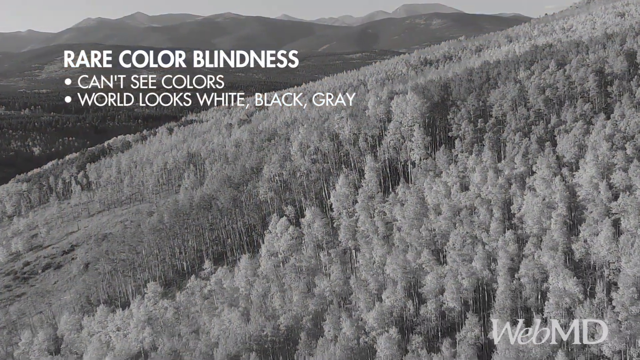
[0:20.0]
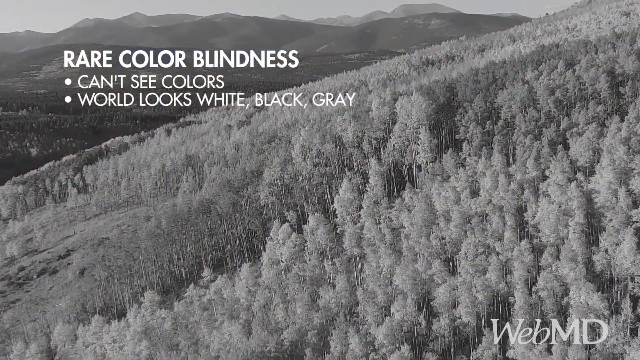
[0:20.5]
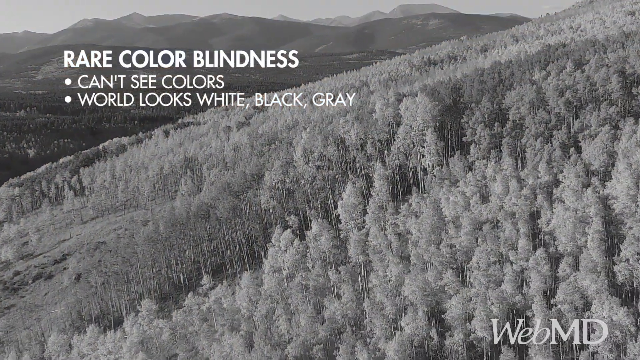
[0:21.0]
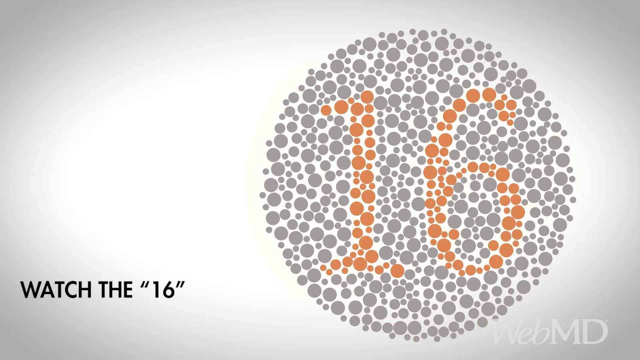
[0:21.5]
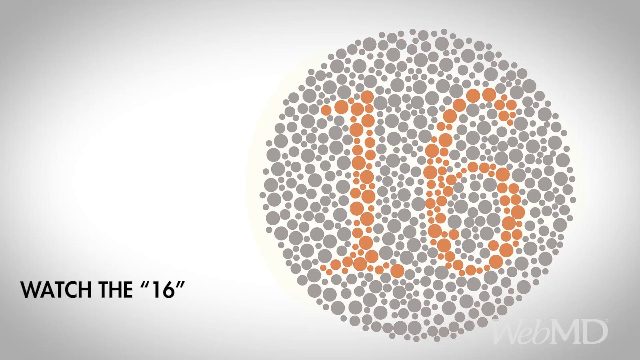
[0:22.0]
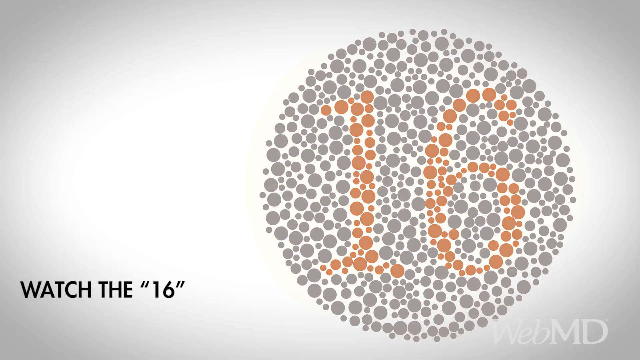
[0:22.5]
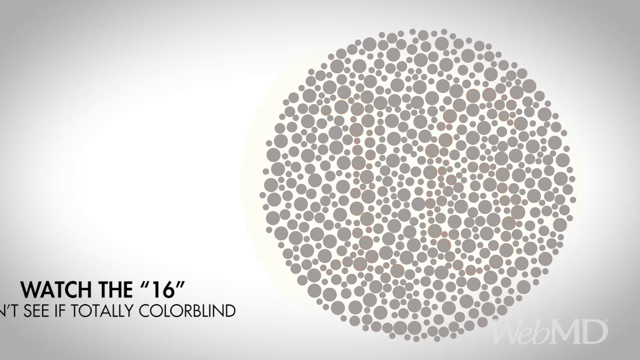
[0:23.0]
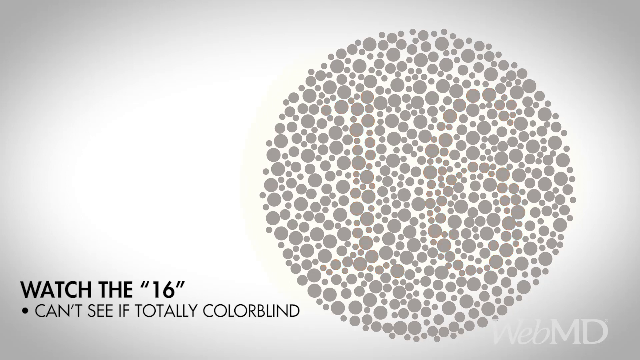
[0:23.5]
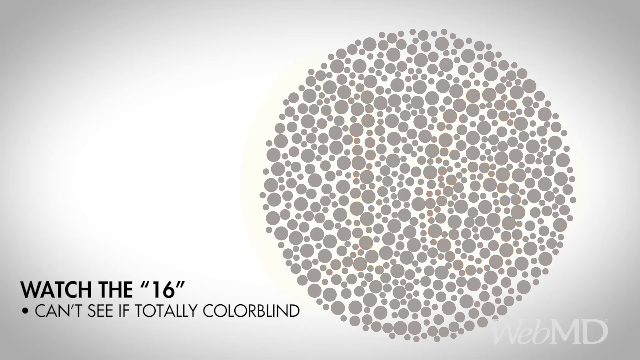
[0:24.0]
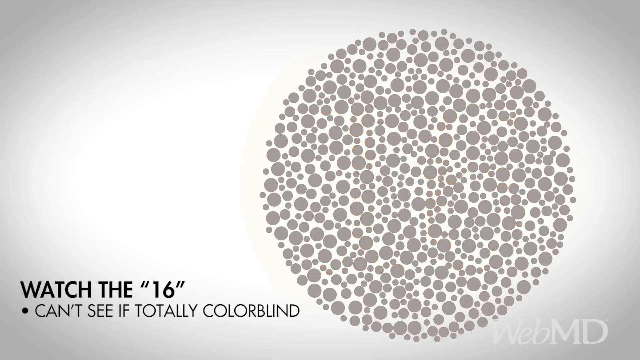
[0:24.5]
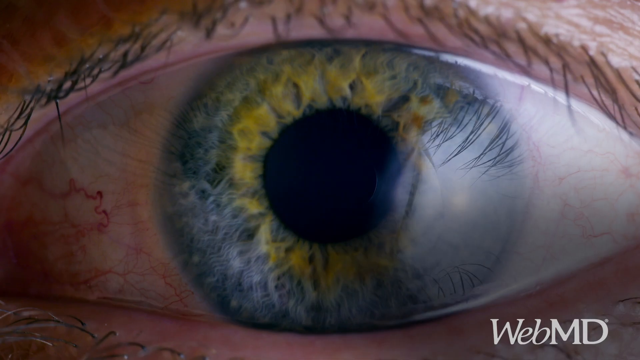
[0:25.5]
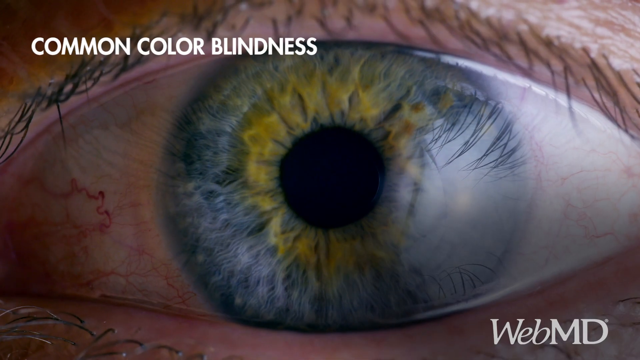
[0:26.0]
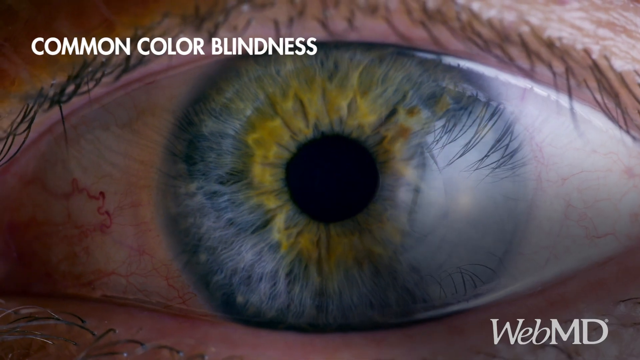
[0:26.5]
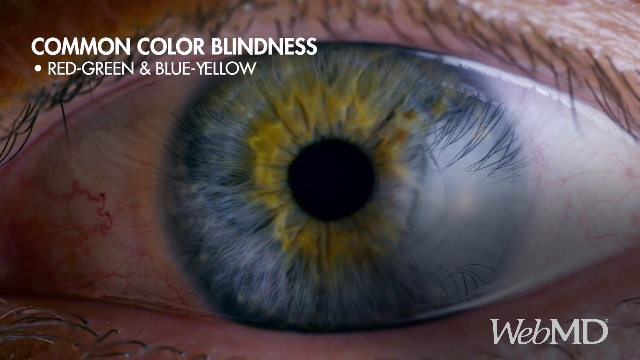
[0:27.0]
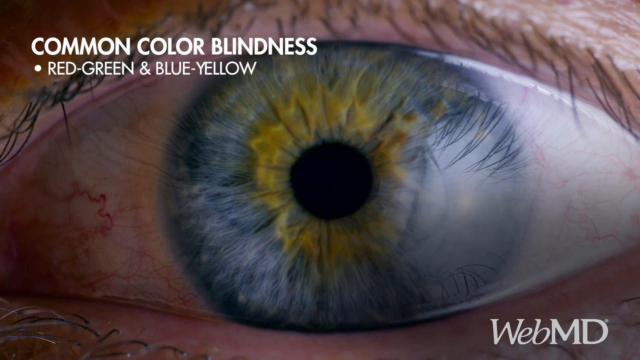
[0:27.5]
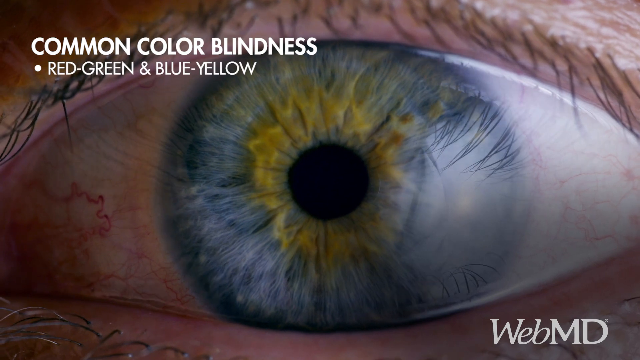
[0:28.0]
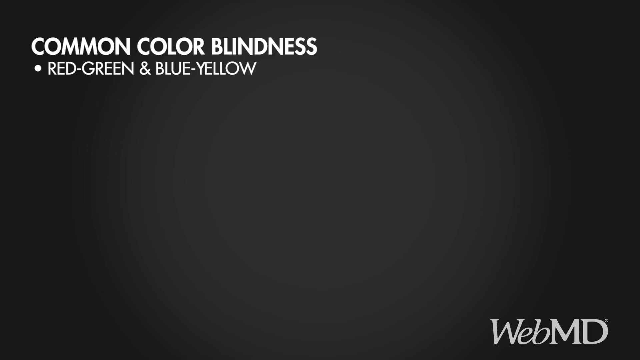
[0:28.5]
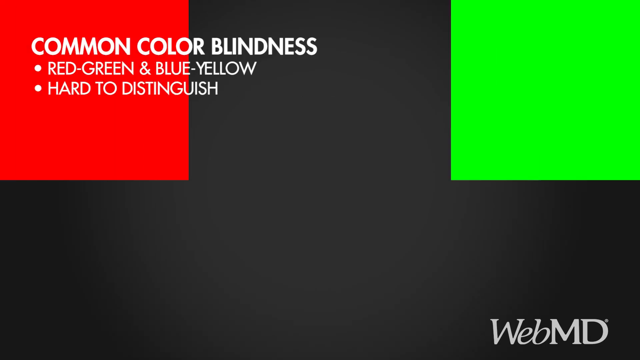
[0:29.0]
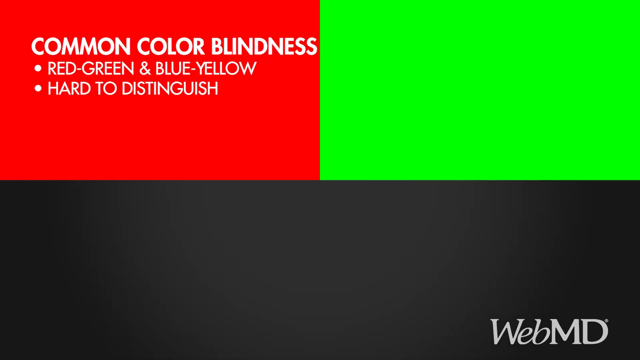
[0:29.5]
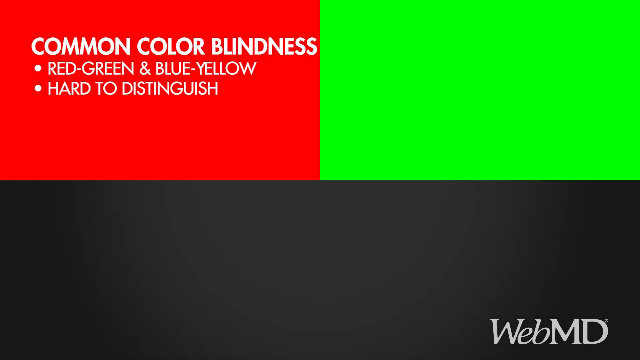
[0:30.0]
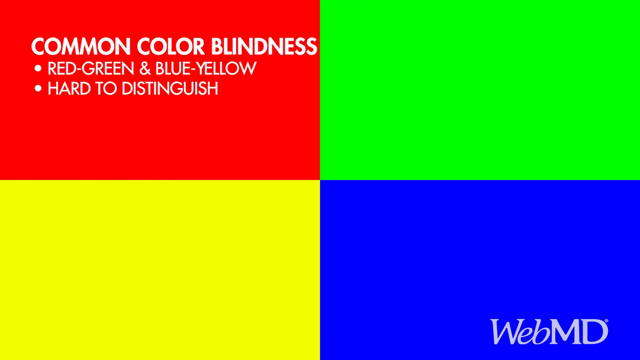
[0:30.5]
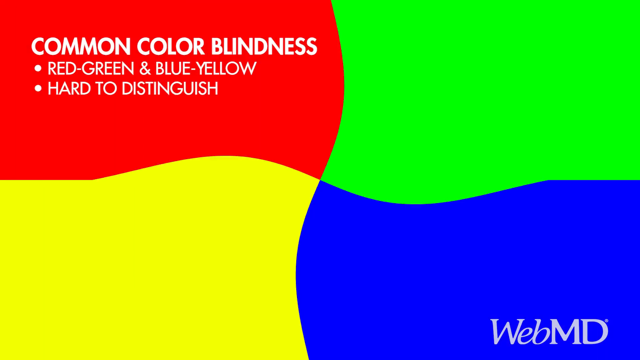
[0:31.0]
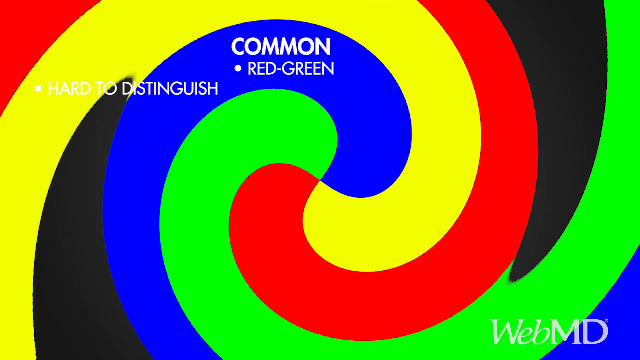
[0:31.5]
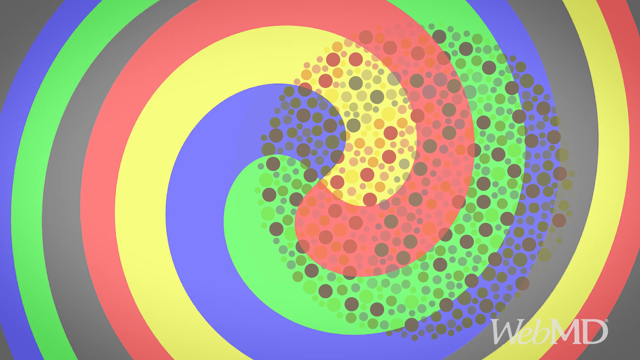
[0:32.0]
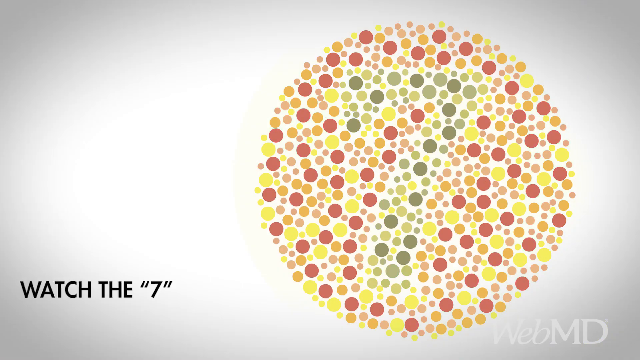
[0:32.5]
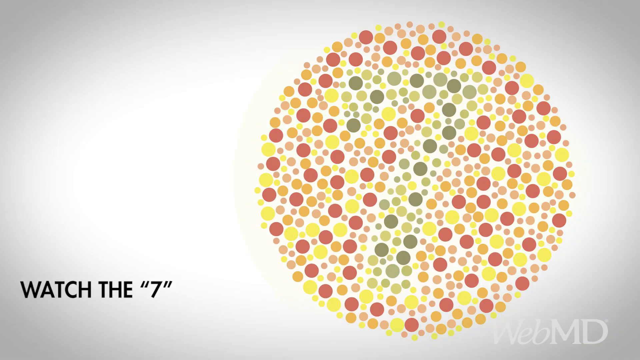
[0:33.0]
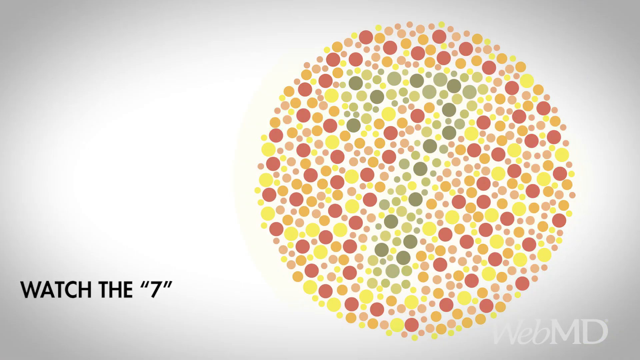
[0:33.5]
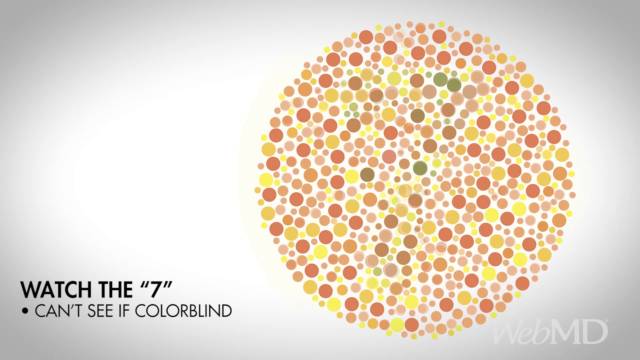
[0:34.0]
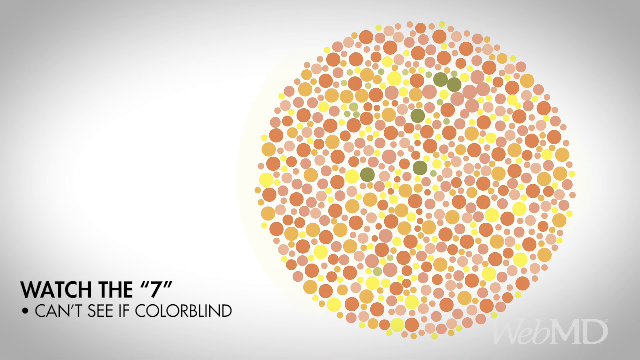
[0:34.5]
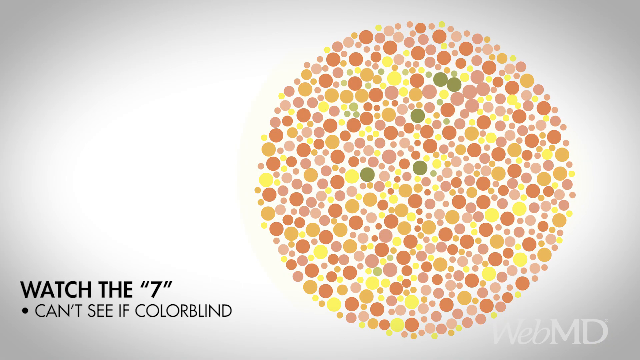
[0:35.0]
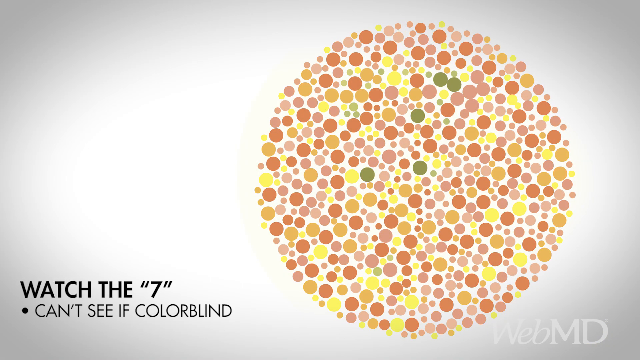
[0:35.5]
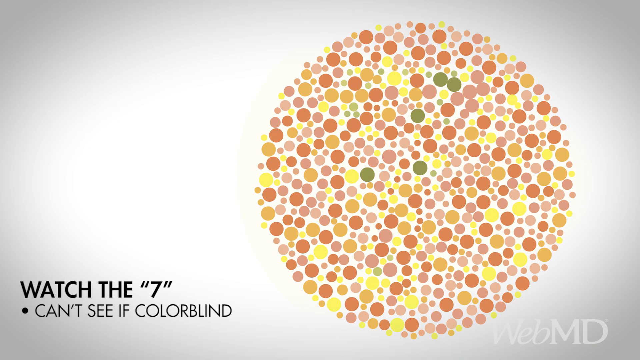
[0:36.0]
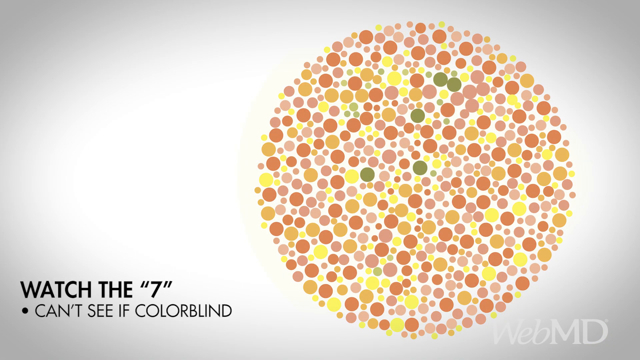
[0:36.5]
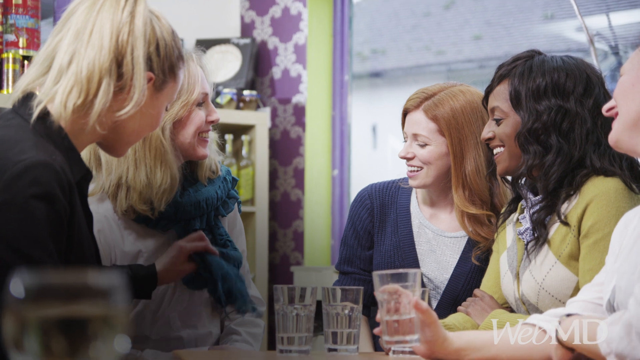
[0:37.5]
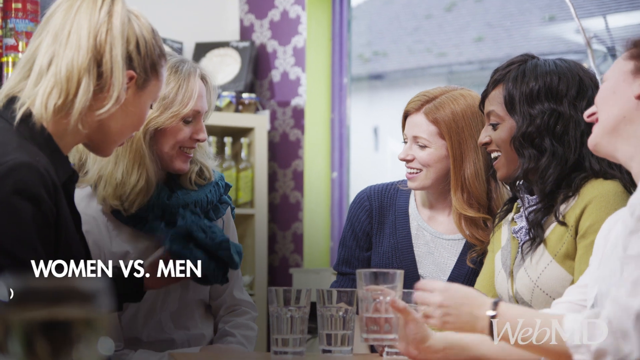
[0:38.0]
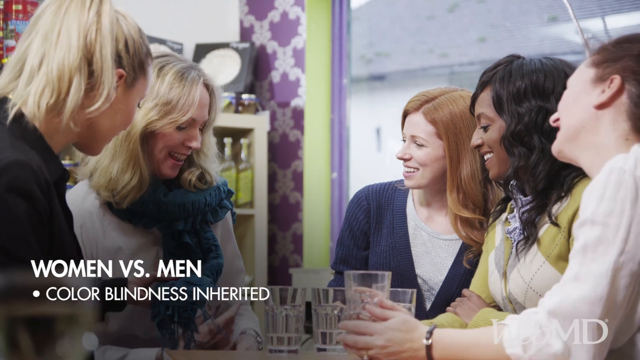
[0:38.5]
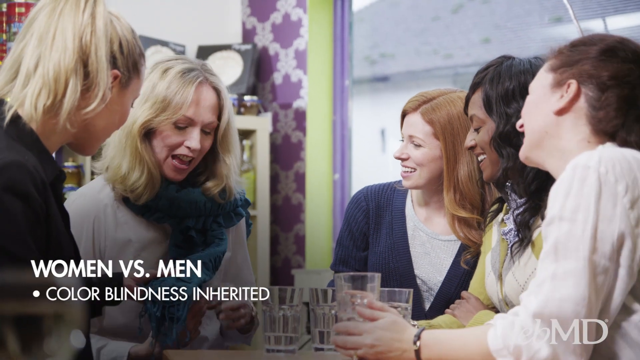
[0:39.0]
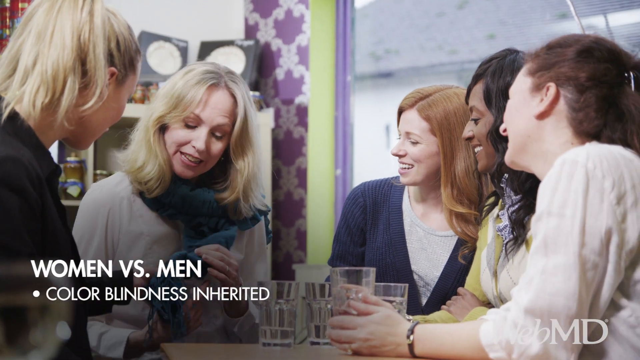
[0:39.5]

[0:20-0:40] The aerial drone shot of the forest continues, with the drone flying forward. The text about rare colour blindness stays in the top left corner with its two bullet points about symptoms. The forest landscape, which started out in colour with lots of yellow hues, is now black and white. The video then cuts back to a white screen with a circle containing a number on the right side of the screen; the circle is made up of many small grey circles, and in its middle the number 16 is made up of orange circles. In the bottom left, the word "WATCHED" appears with a 16 in bold, all-capital black font, and underneath, in less bold text, the words "CAN'T SEE if totally colour blind." Next comes a zoomed-in shot of a pupil, an eye, with the outlines of the eyelids somewhat visible. In the top left, the words "COMMON COLOUR BLINDNESS" appear in bold white font, and bullet points appear underneath: first "red green" and "blue yellow," then "HARD TO DISTINGUISH." The screen fills up with four rectangles, red, green, blue and yellow, which start to spin and blur into one shape. Another colour blindness test follows, this time with "WATCHED" and a 7 in the bottom left. Facts about women versus men on colour blindness then appear in the bottom left.